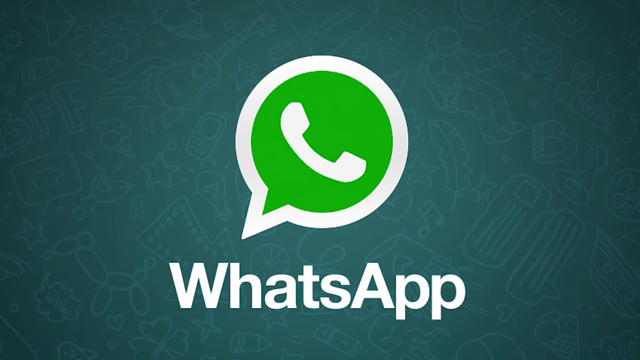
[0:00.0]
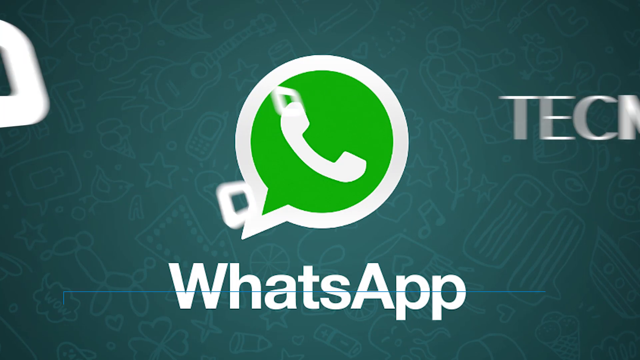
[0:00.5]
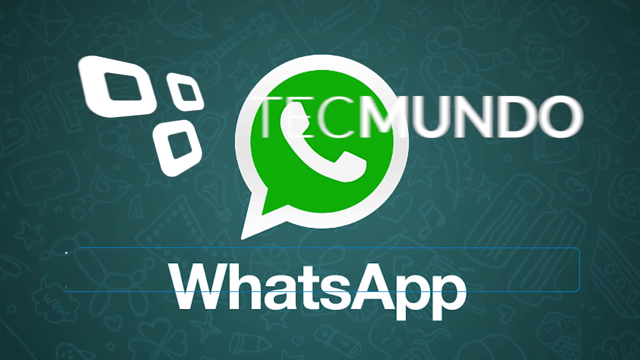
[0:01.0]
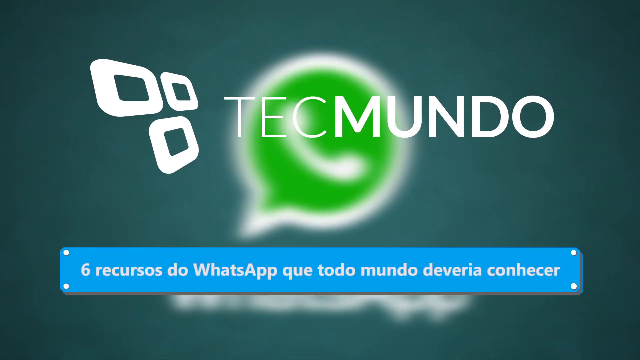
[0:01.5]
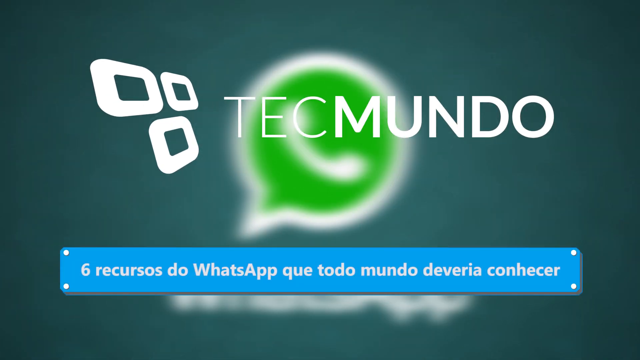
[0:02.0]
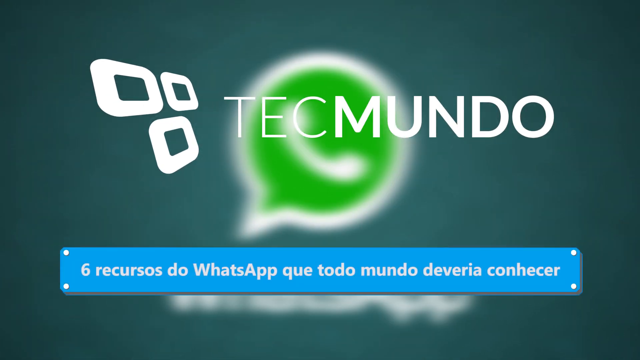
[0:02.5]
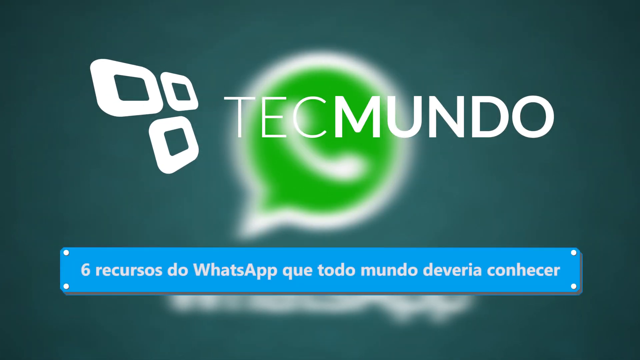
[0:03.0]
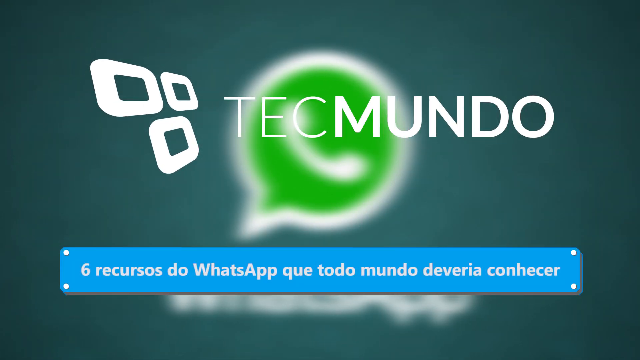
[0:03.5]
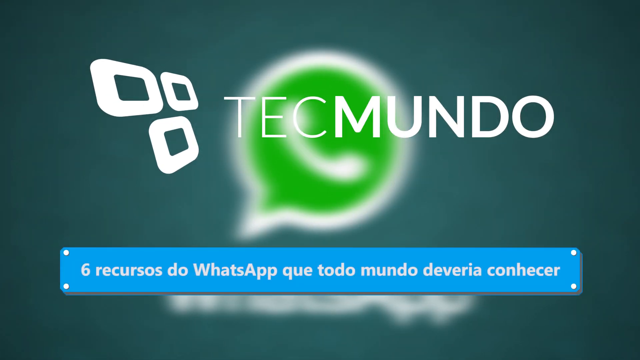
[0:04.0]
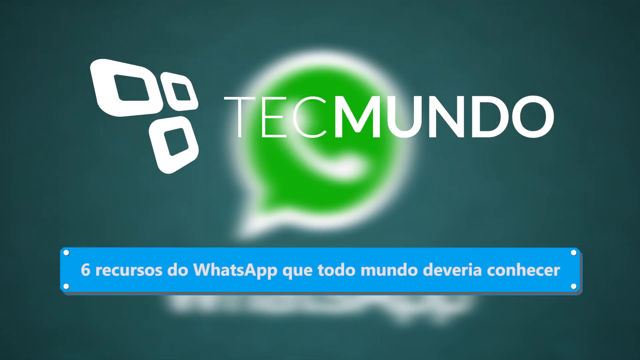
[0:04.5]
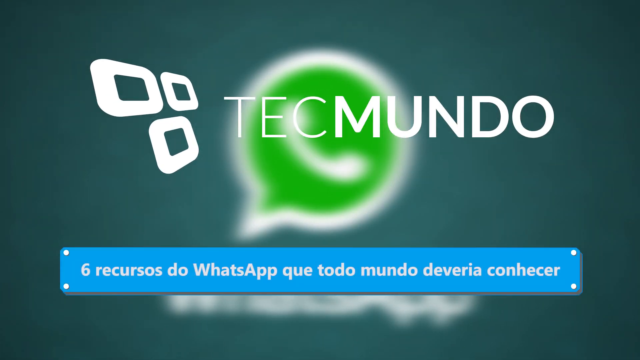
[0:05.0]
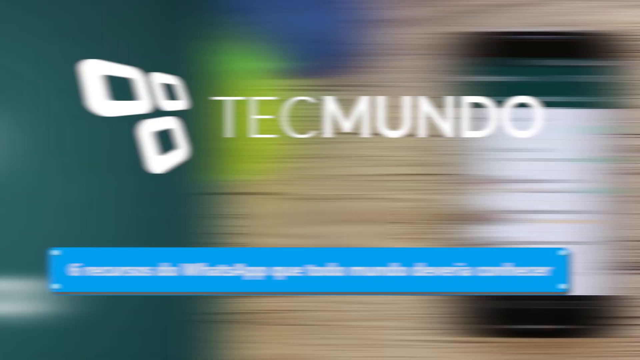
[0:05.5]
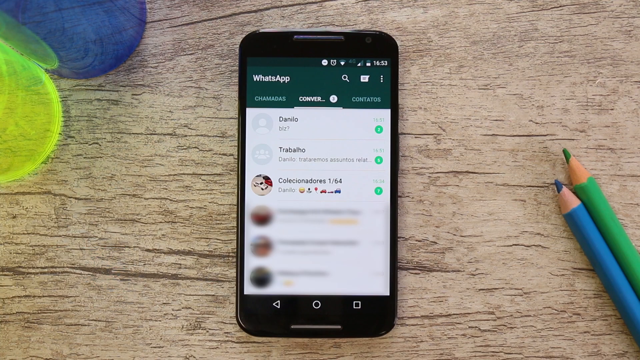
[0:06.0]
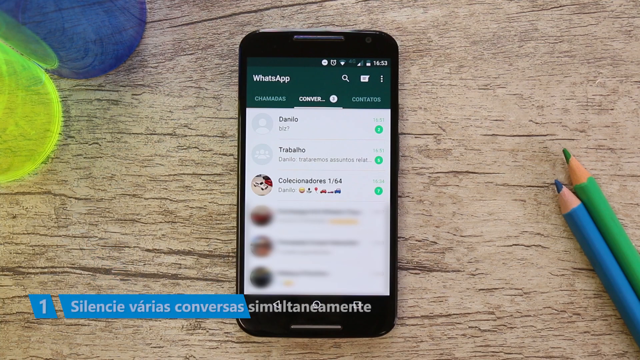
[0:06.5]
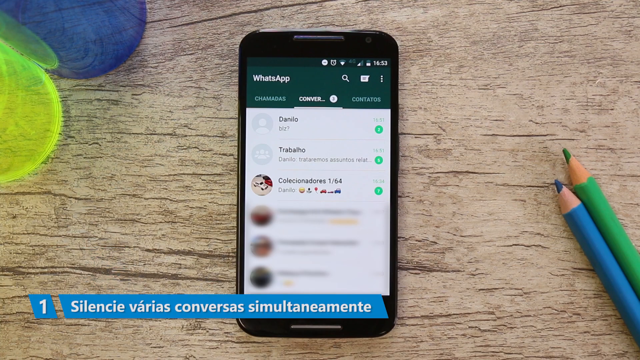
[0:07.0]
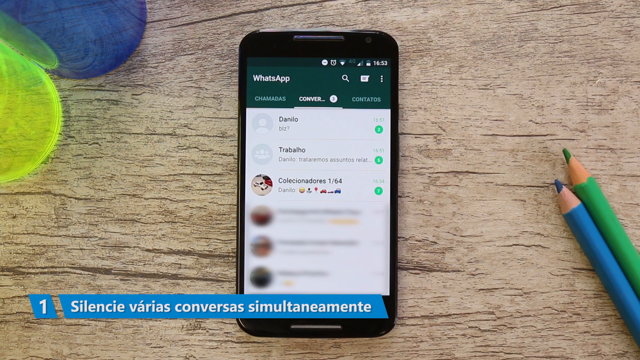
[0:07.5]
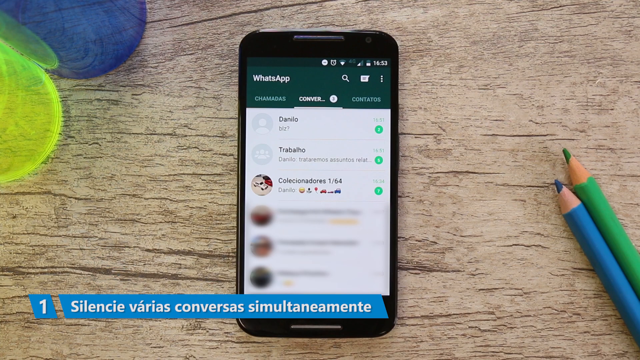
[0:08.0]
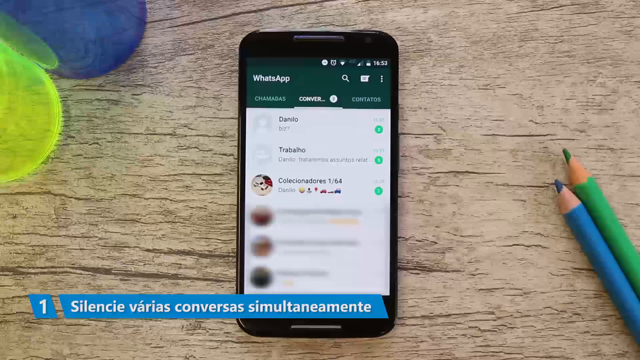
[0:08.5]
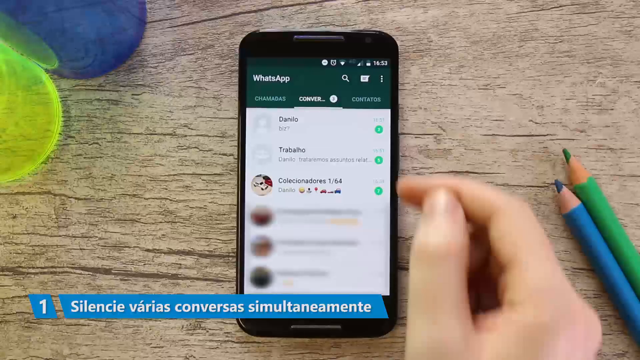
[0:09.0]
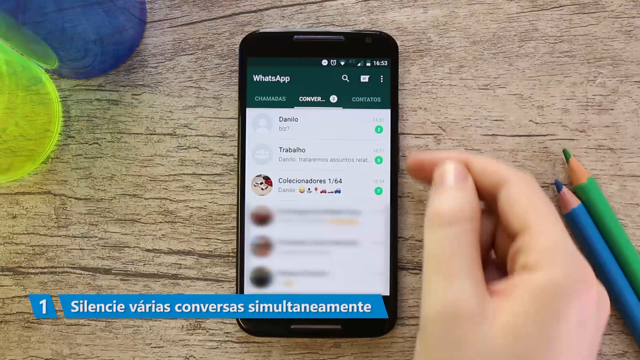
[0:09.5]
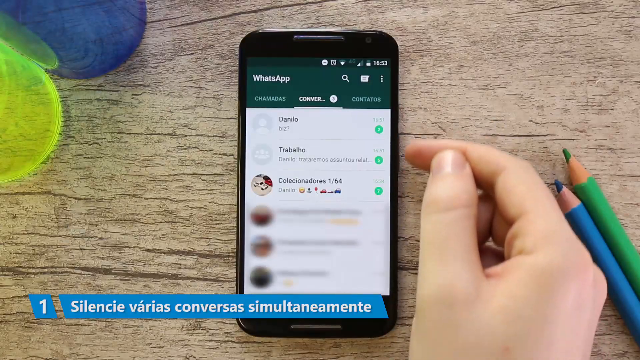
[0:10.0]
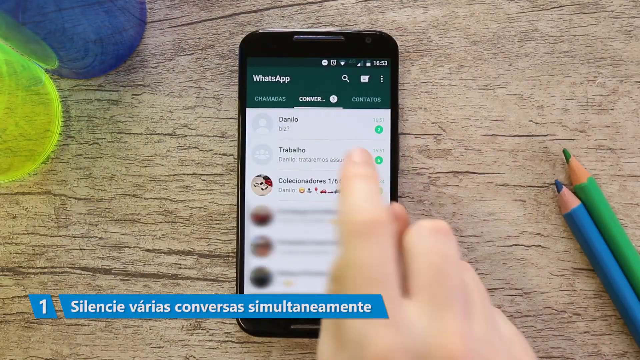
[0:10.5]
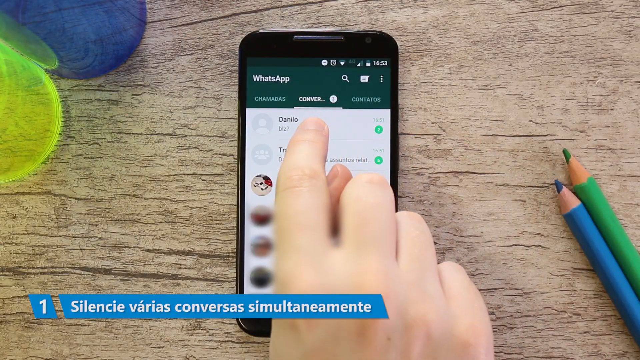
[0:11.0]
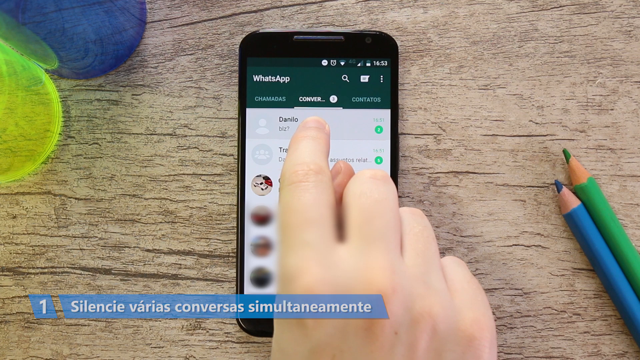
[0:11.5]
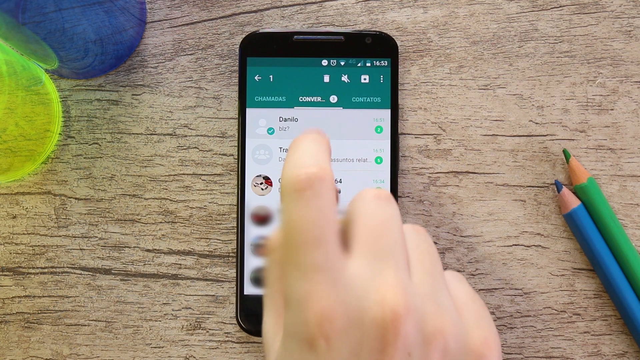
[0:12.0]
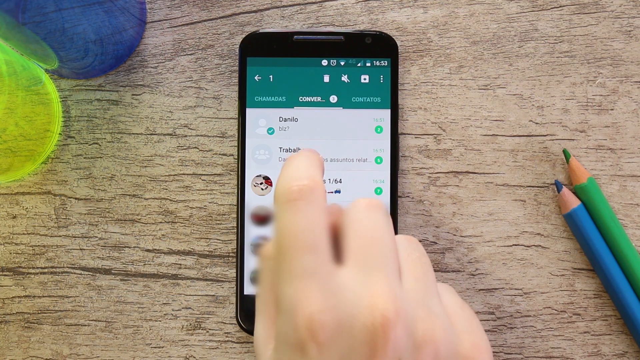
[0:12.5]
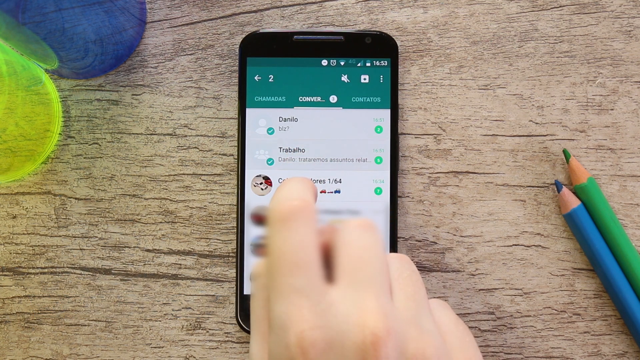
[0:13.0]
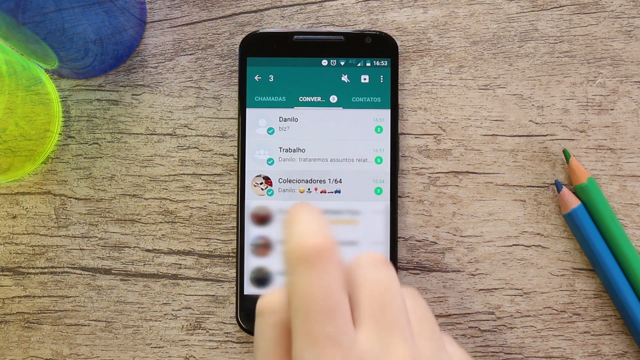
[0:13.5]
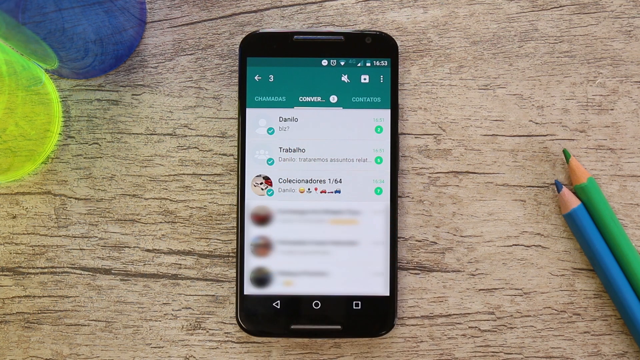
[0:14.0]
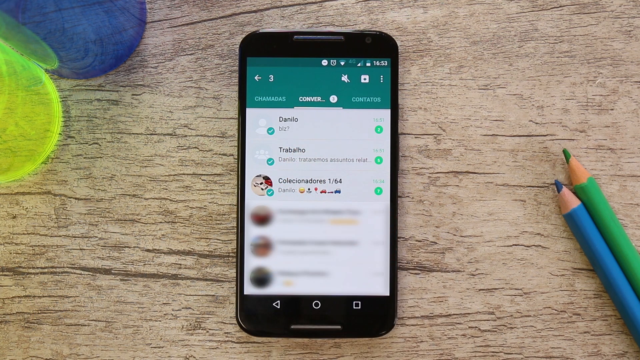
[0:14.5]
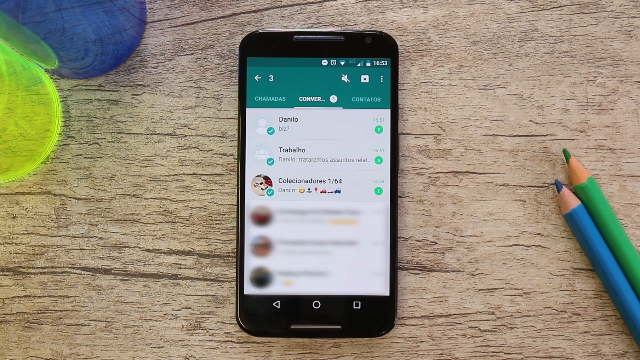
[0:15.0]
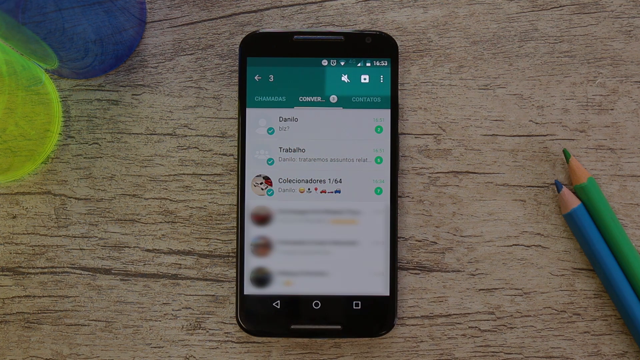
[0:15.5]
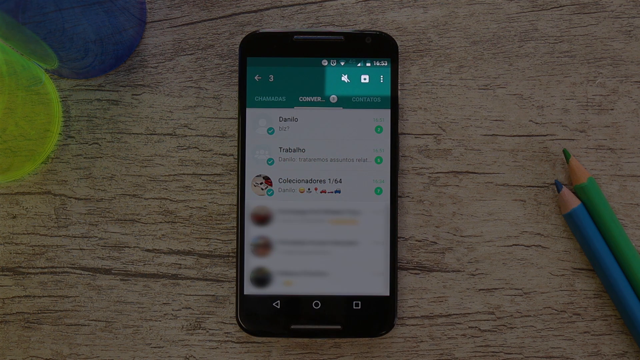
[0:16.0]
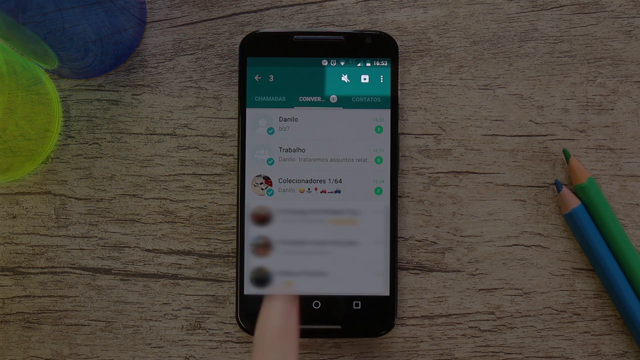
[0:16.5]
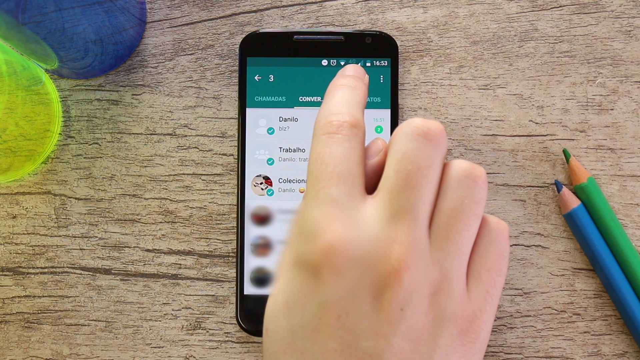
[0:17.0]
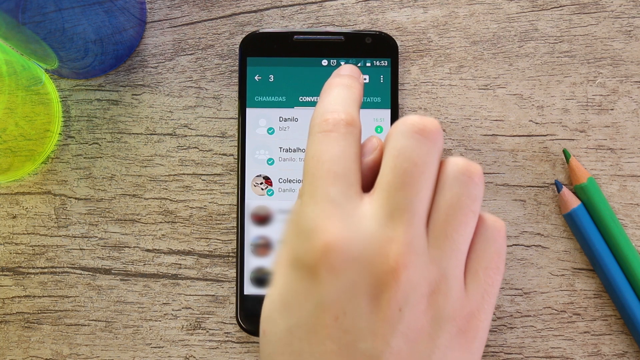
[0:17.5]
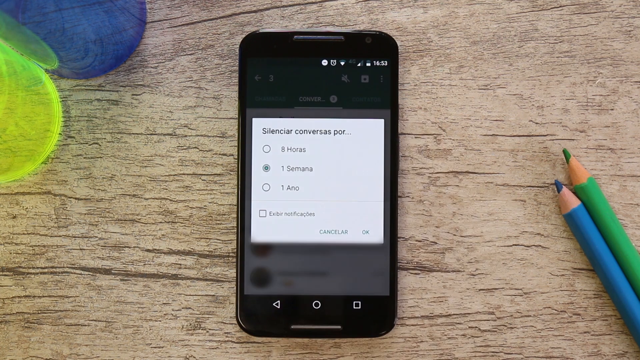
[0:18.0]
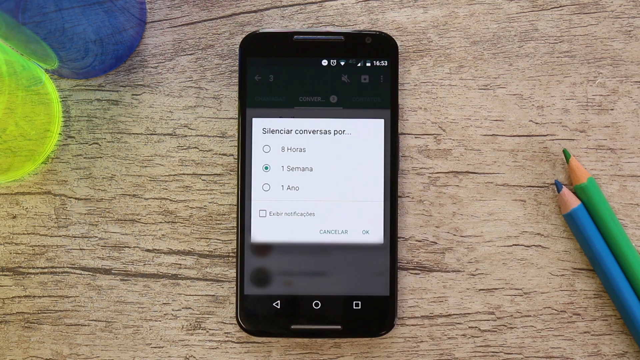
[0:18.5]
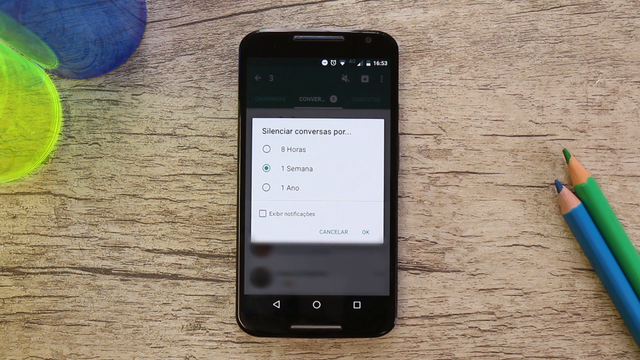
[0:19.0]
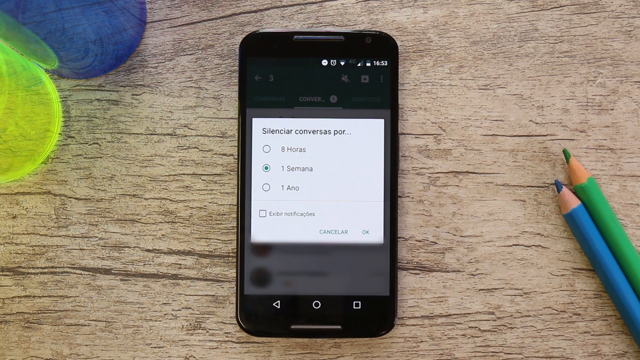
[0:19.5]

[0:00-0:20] The video involves WhatsApp and Tecmundo and is in Spanish; the app appears to be a Spanish version of WhatsApp. In the bottom right-hand corner of the screen is a play button, a red square with a white play symbol. A user uses their hand on a black smartphone to tap on parts of the app. There is a green logo with a speech box. On the right-hand side, the person taps on the name Danilo, and three different people's names are also listed. They then seem to silence a person for one week, with the screen reading "one semana". Green and red colored pencils are on the right side of the screen, to the right of the phone, and purple and yellow circles are on the left side of the phone.